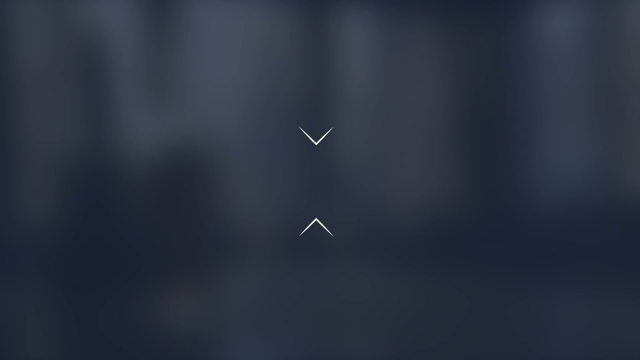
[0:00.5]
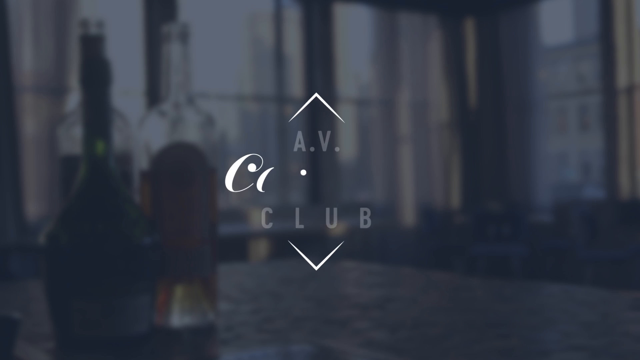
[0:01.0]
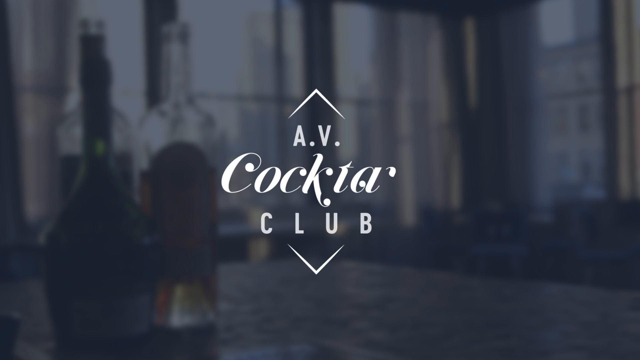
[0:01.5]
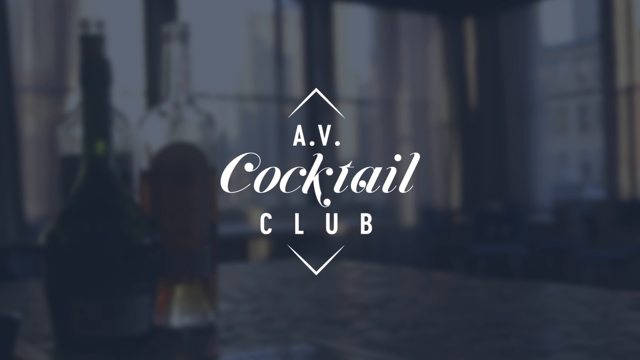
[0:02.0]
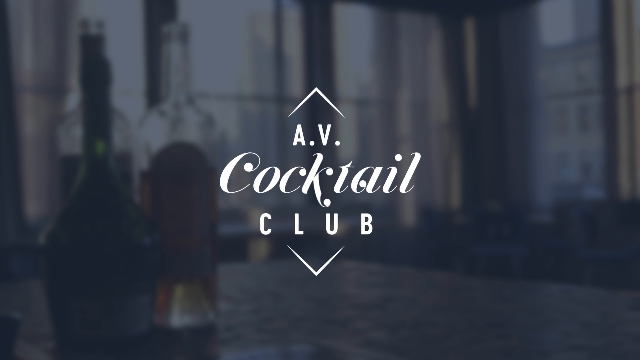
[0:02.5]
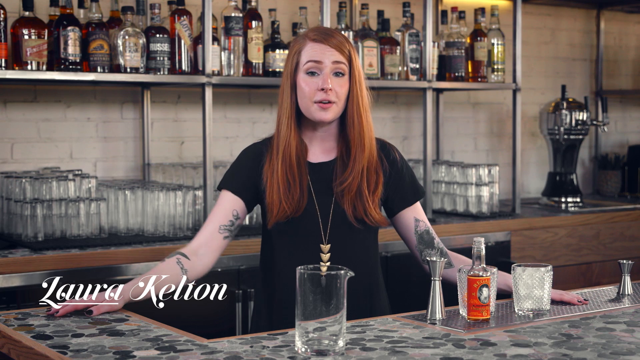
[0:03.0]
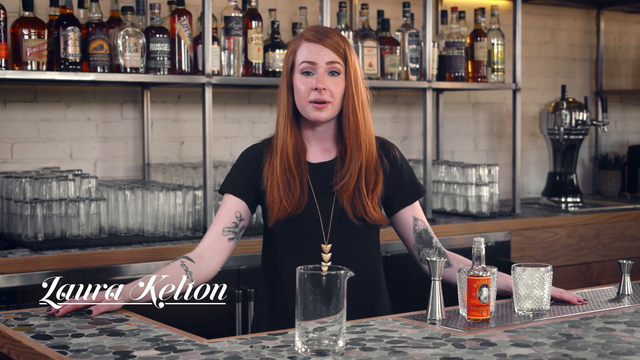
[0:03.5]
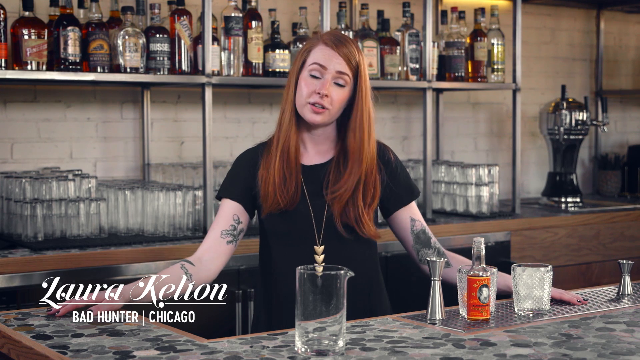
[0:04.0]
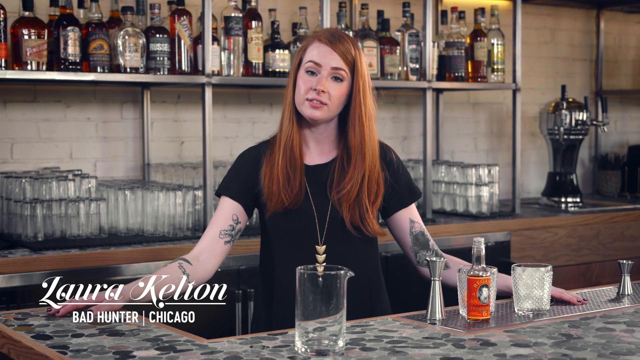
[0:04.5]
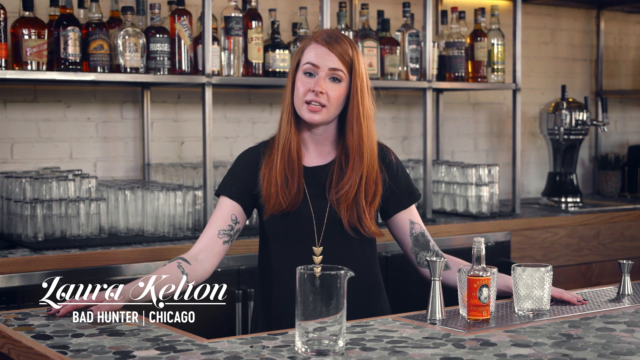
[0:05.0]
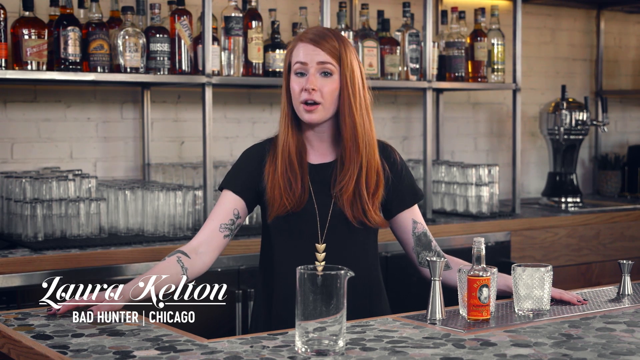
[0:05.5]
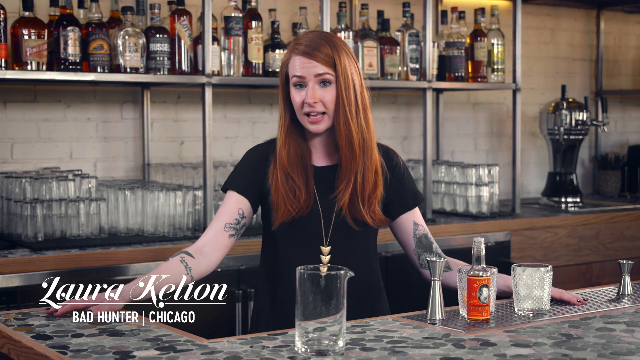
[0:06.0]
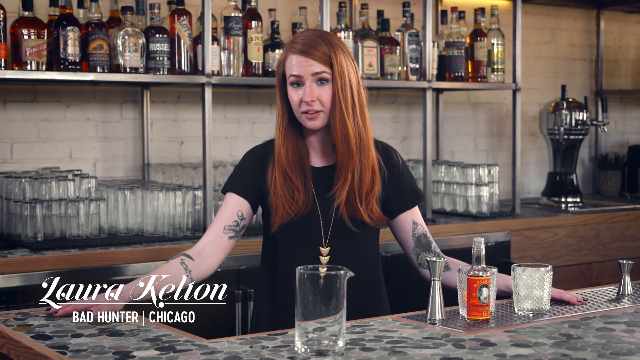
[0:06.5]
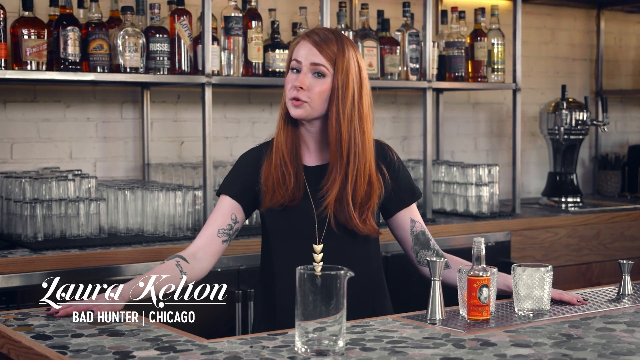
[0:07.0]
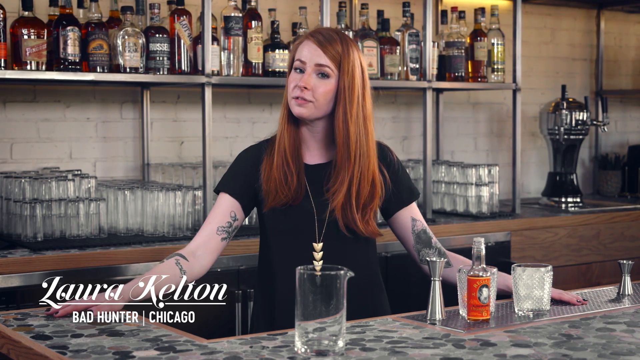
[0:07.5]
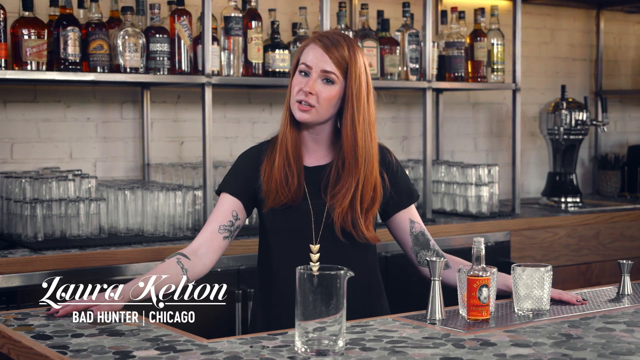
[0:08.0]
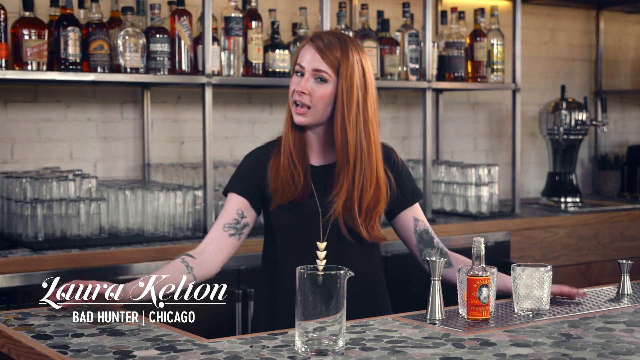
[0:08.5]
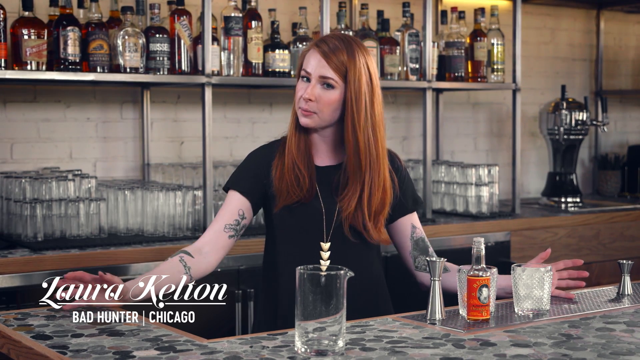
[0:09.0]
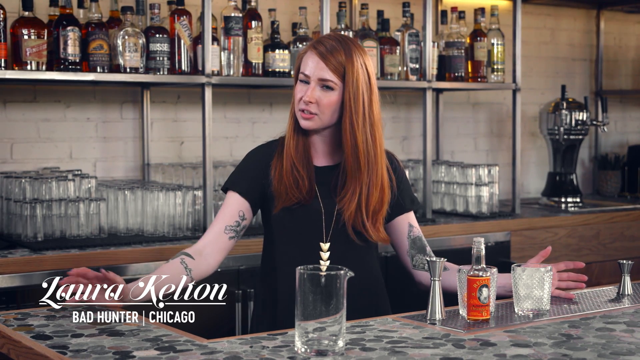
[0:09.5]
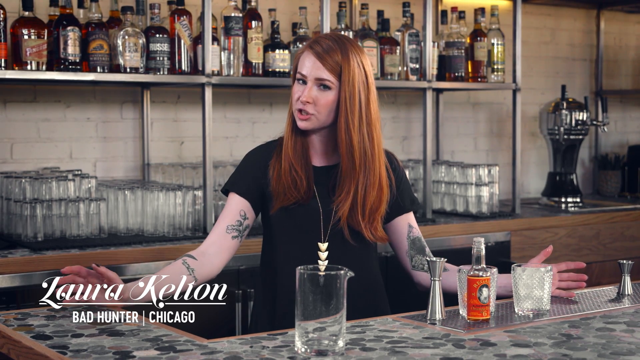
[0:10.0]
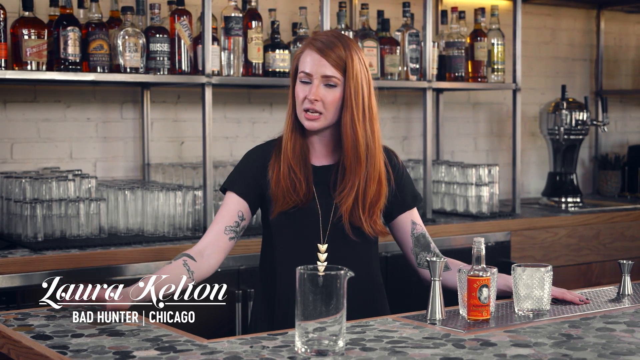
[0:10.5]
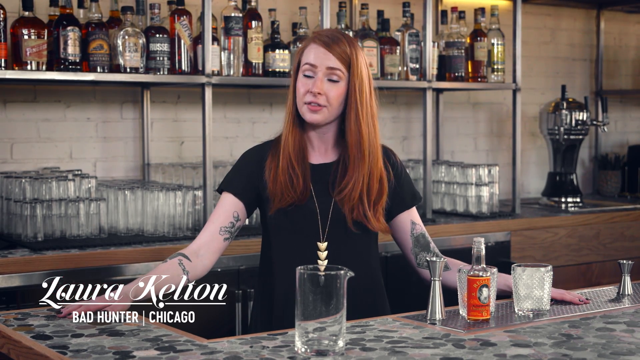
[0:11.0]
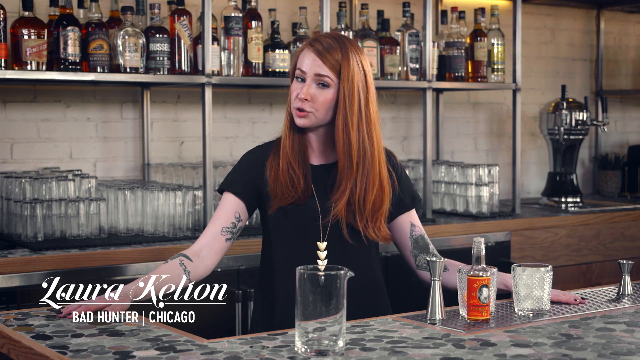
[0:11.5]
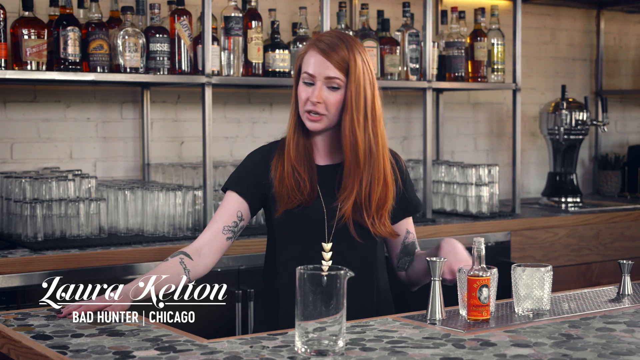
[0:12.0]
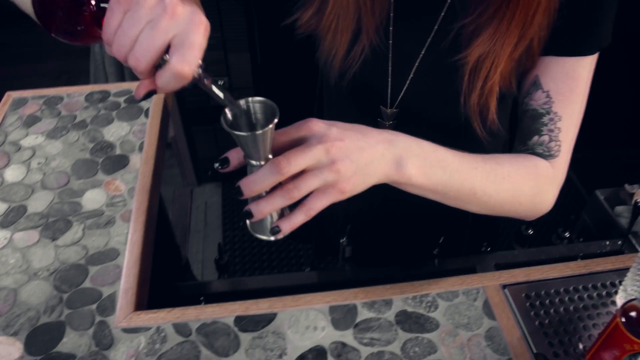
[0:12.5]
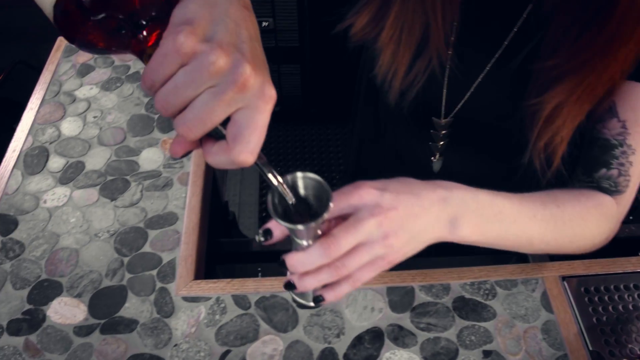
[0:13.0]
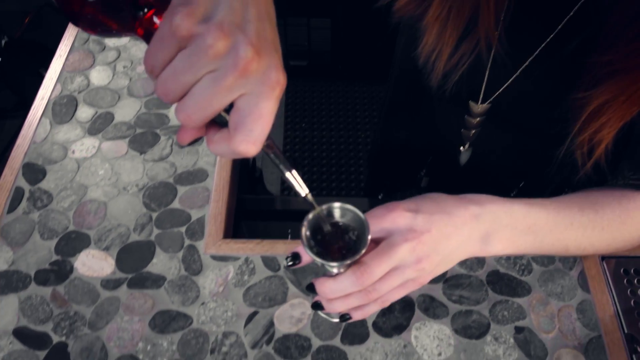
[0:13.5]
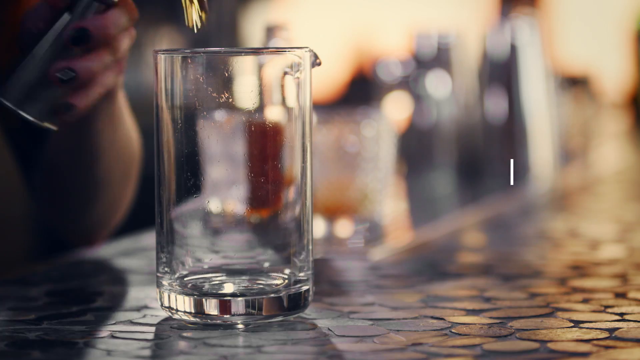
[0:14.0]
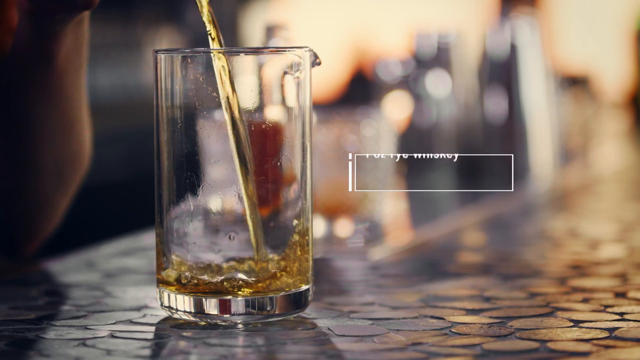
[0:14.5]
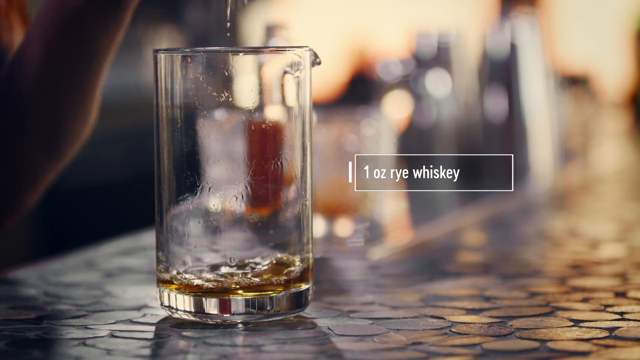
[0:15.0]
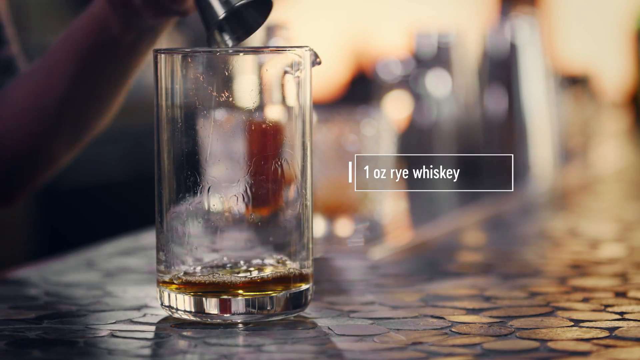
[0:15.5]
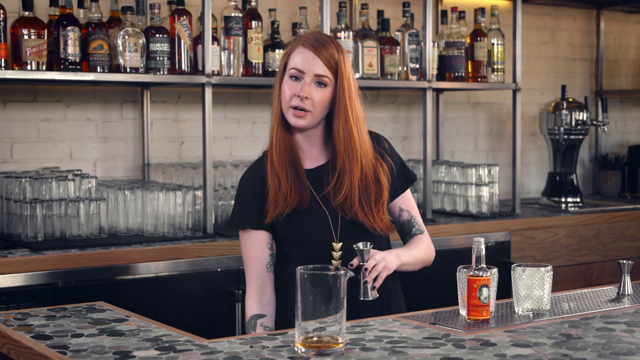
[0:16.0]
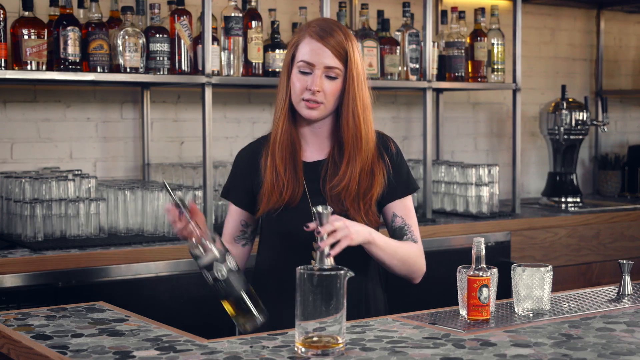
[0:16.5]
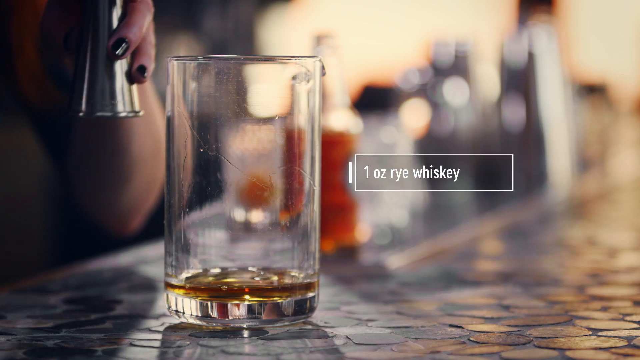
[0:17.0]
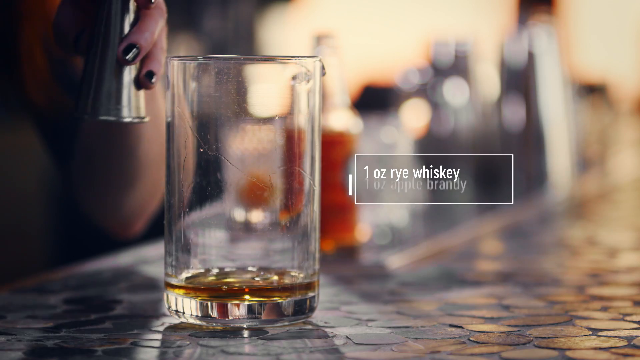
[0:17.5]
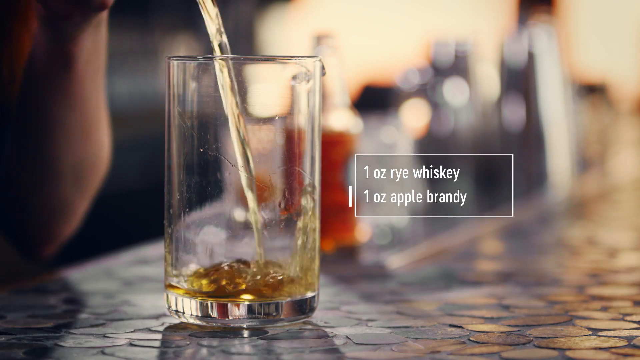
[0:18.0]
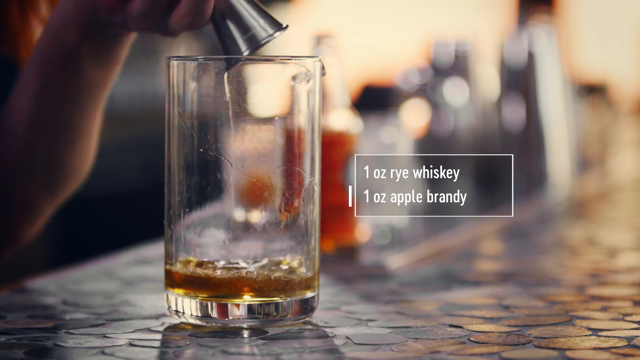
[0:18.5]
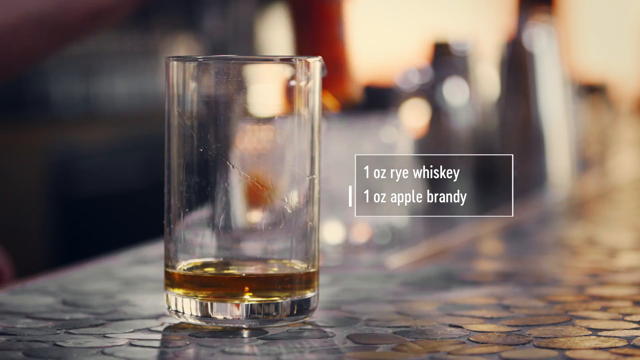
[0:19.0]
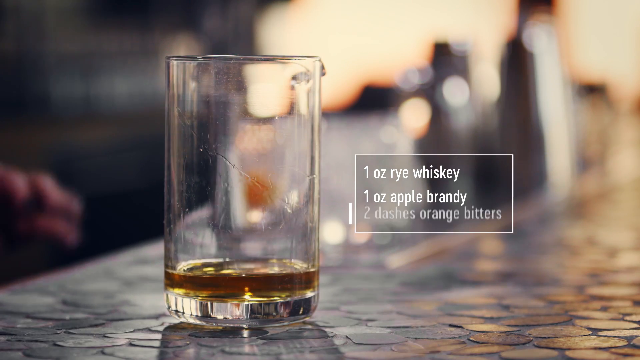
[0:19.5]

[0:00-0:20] Big white words written in a stylish way read "AV Cocktail Club" over a blurry background. A woman who appears calm and collected comes into view; it looks like she is in a bar or club. There is a lot of alcohol behind her, and she has a bottle of alcohol just in front of her. She has brown hair, and tattoos cover her arms. It looks like she is about to make some kind of cocktail. She pours whiskey and brandy into a glass, adds some orange bitters to the same glass, and mixes them.